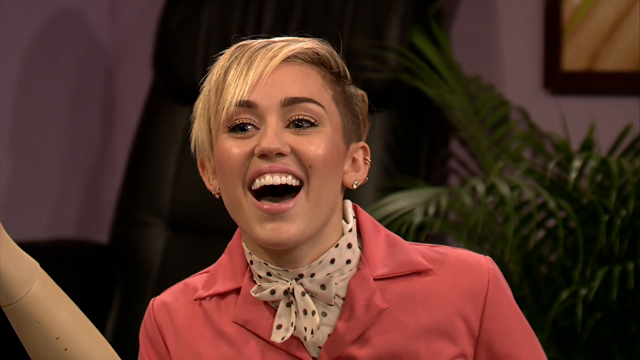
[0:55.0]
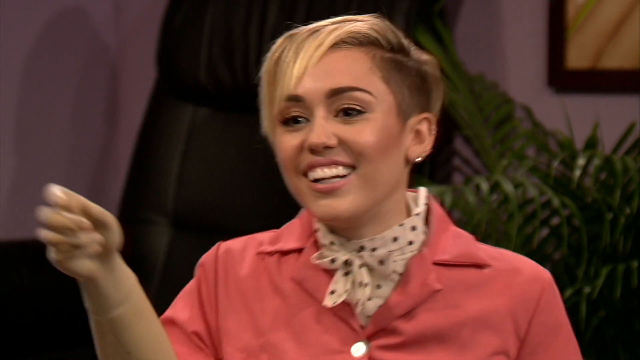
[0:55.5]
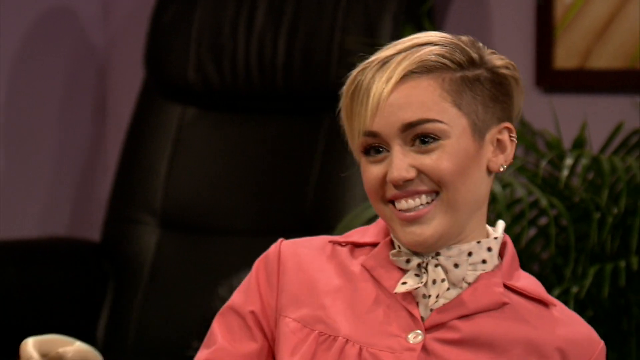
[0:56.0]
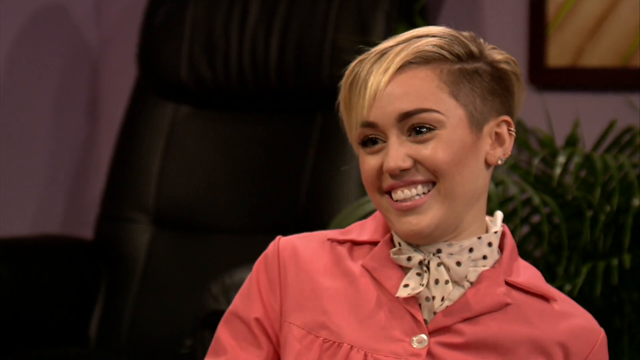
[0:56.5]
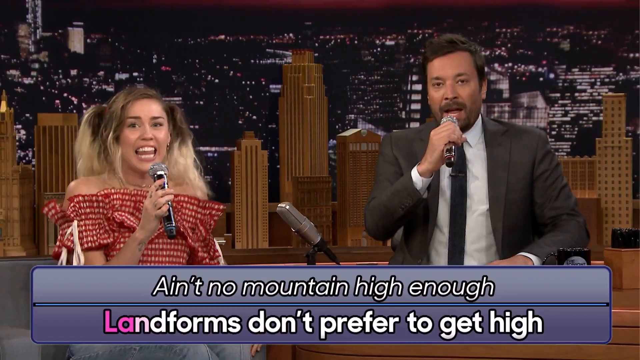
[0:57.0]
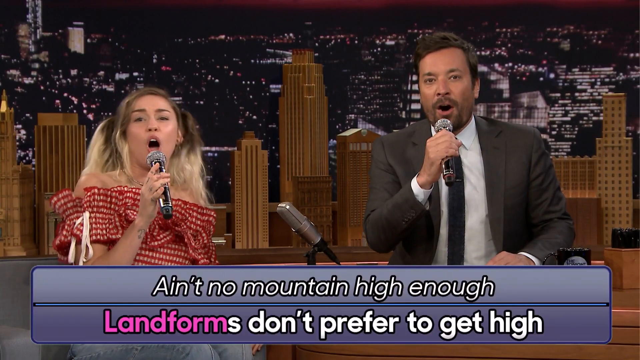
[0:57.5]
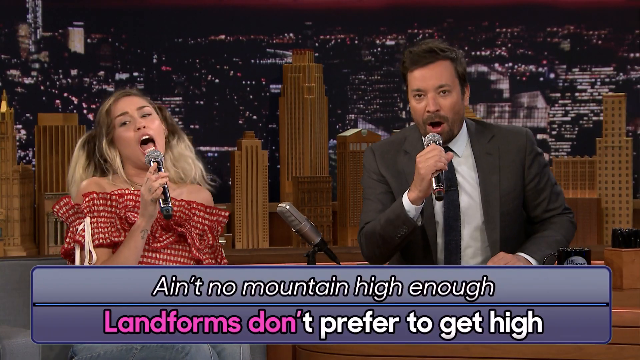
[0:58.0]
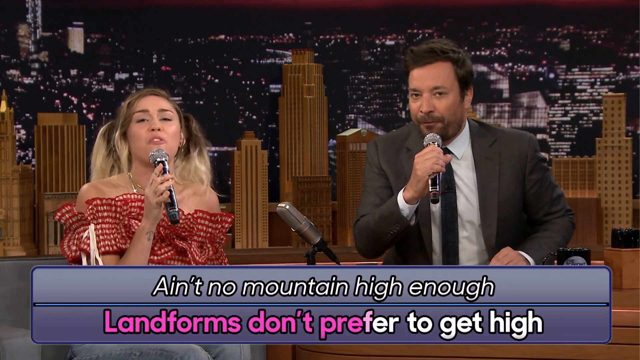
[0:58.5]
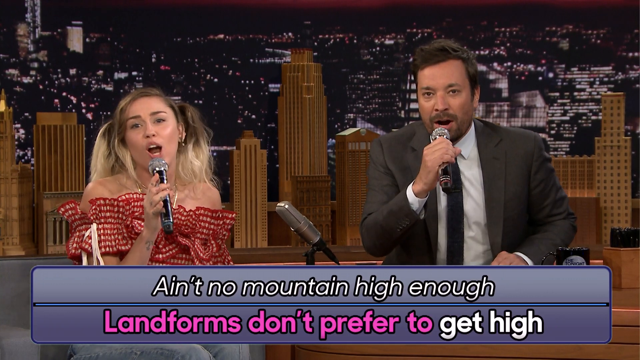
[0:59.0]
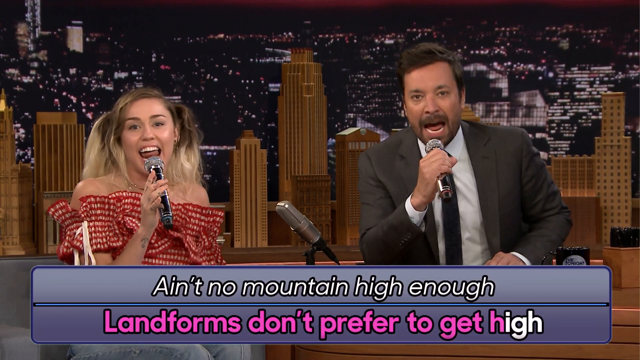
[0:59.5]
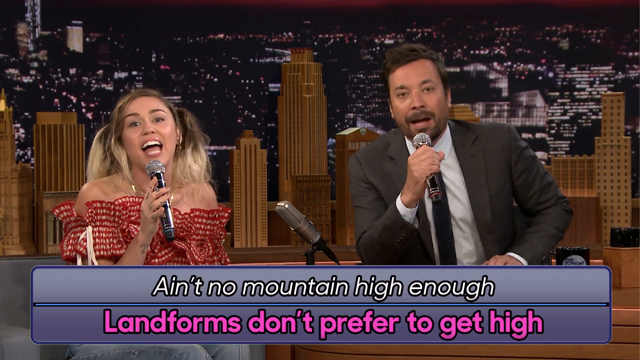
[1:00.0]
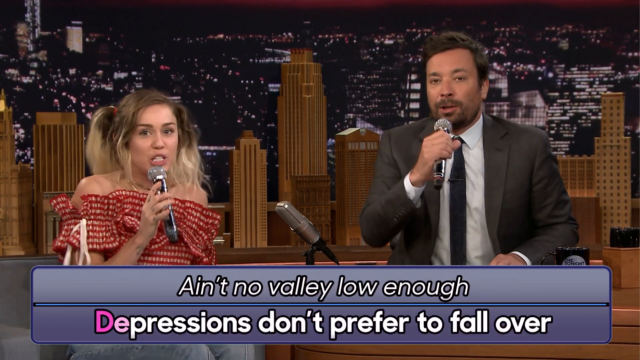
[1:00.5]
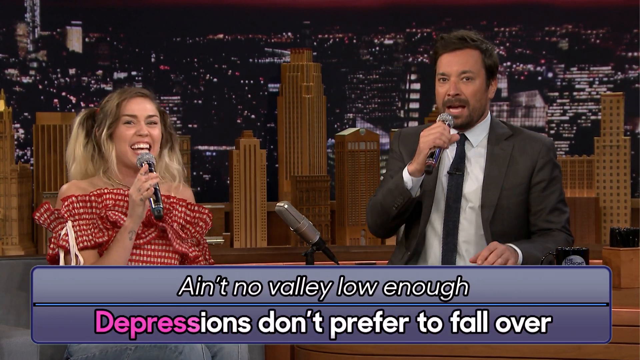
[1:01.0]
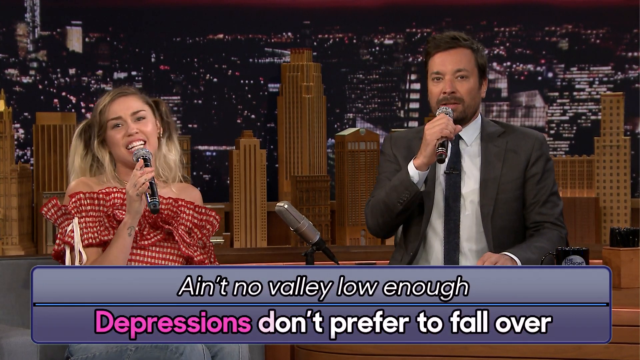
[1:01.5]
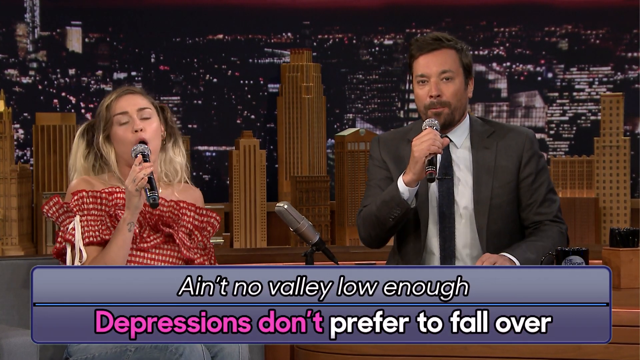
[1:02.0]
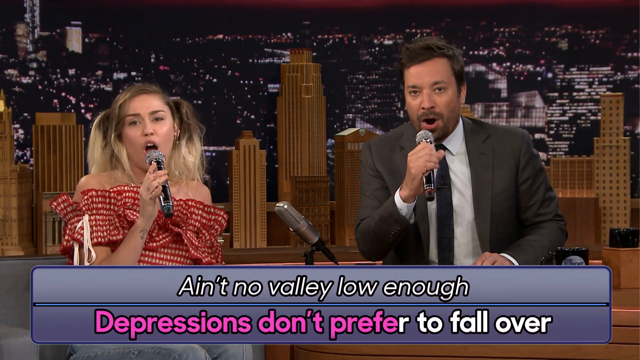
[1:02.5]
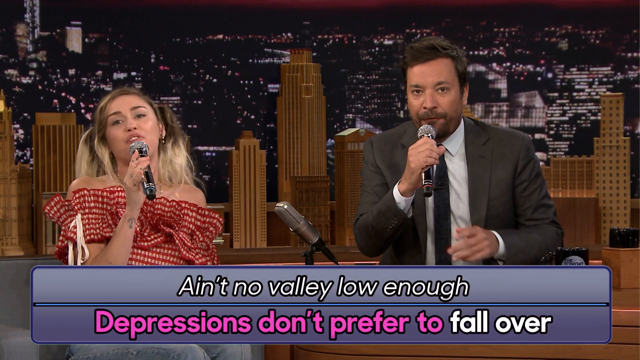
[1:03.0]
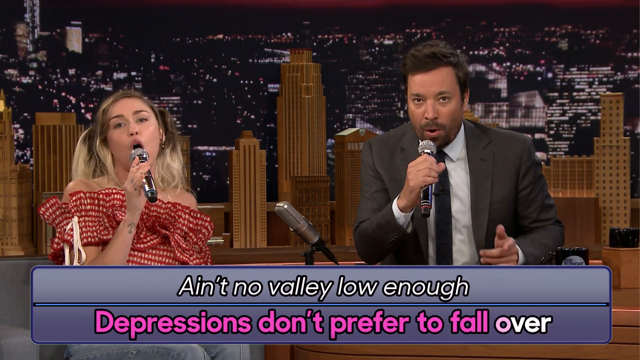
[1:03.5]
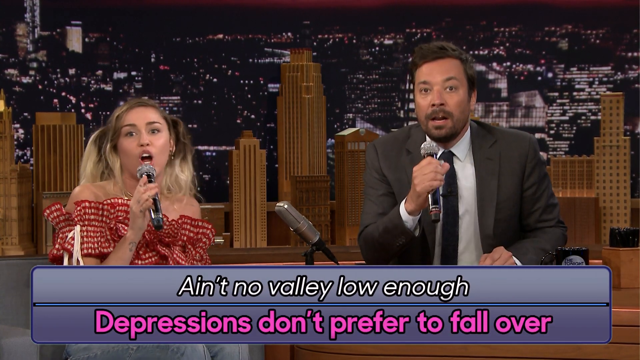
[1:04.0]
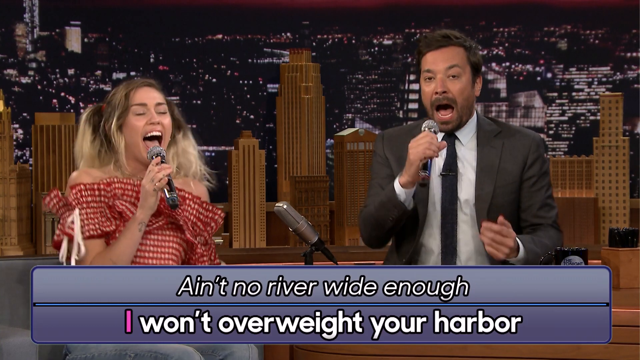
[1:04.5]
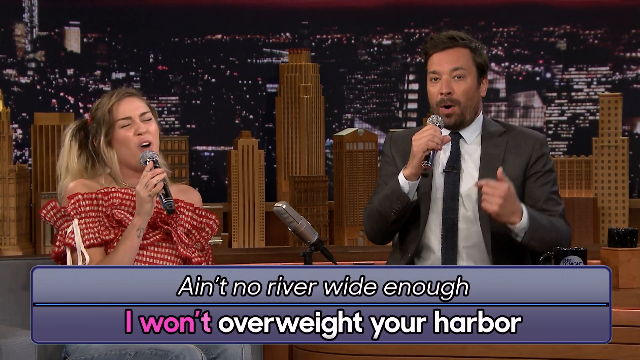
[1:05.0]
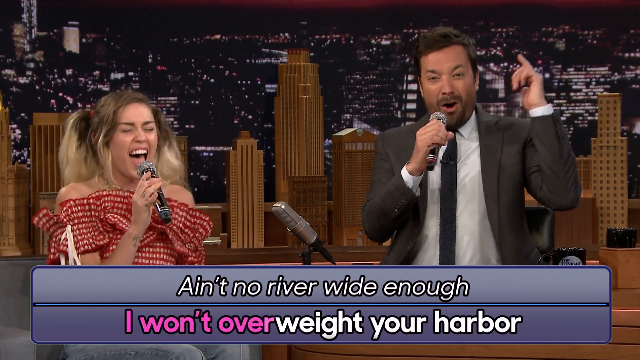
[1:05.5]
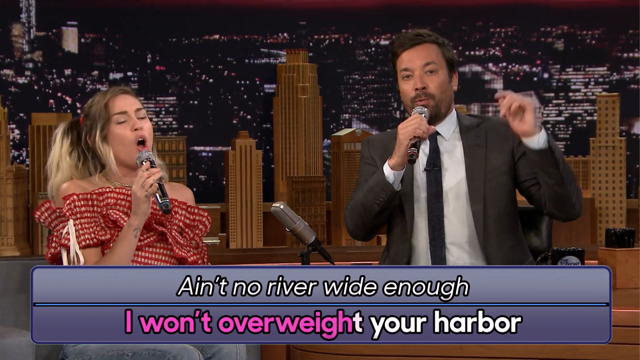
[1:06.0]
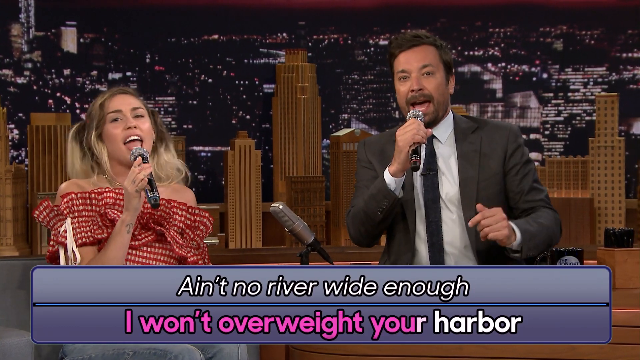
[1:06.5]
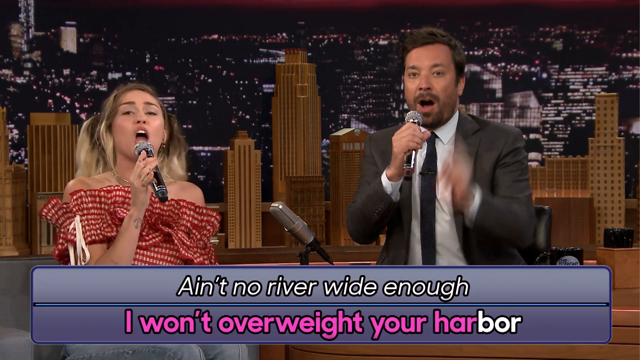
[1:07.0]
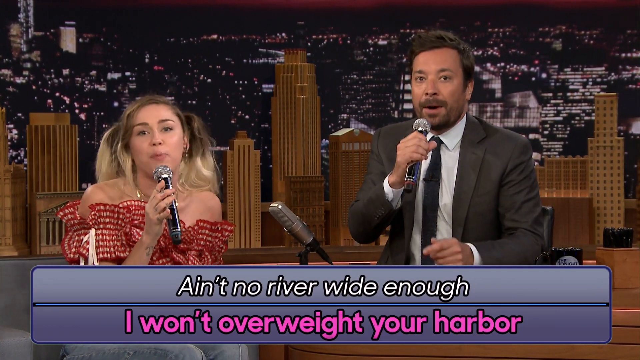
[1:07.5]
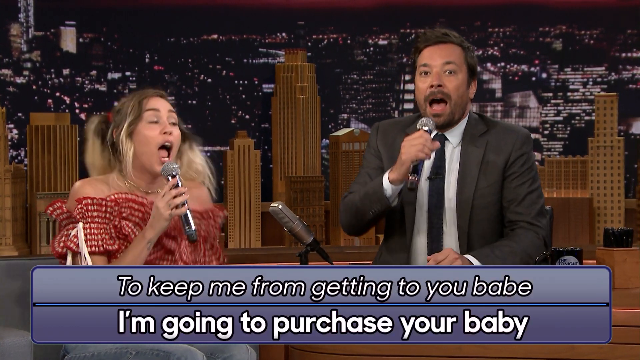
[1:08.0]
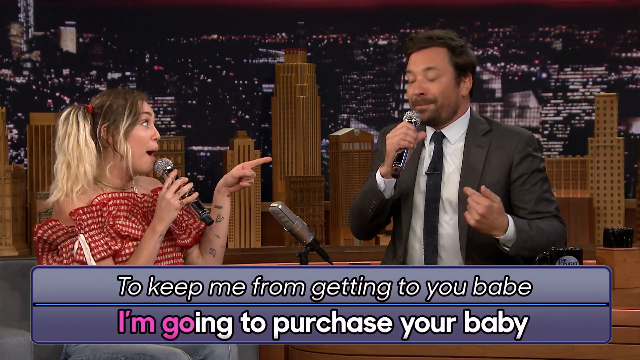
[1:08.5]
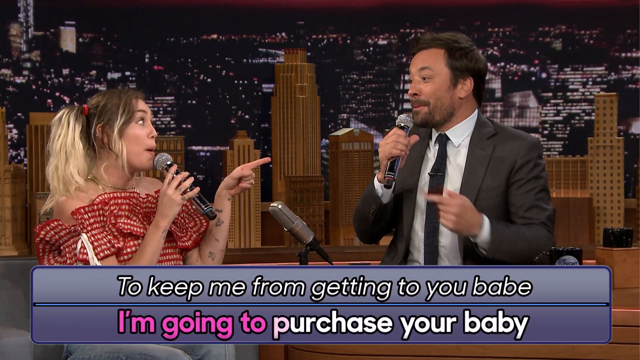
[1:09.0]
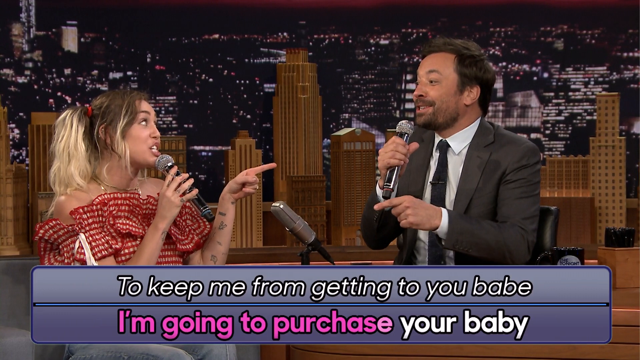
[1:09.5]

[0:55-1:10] Miley, in the pink shirt with short blonde hair, smiles and talks. The video cuts to her dressed kind of like a farmer's daughter, in a red and white shirt that goes down to the shoulders with white ribbons on the side, and blue jeans. She sits in a chair on the left side, while Jimmy is on the right side behind his wooden desk, with a microphone sticking out between them. He wears a gray jacket or sport coat, a white button-up shirt and a long black tie, and has a little stubble and brown hair slightly combed over toward the left. Both hold microphones in their right hands, black normal-sized microphones with silver tips, and sing into them. She has pigtails on both sides; her hair is a browner color until the pigtails, where it is blonder. Song lyrics run across the bottom of the screen. In front of Jimmy on the right are a black cup with the Tonight Show logo and a little wooden box with something black on top. Behind them is a city landscape of goldish-looking buildings of various sizes that looks to be New York, and beyond that is kind of a mural of the night landscape. The Tonight Show logo is still in the bottom right corner.